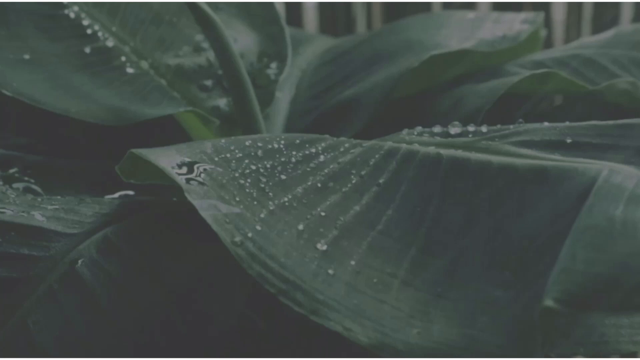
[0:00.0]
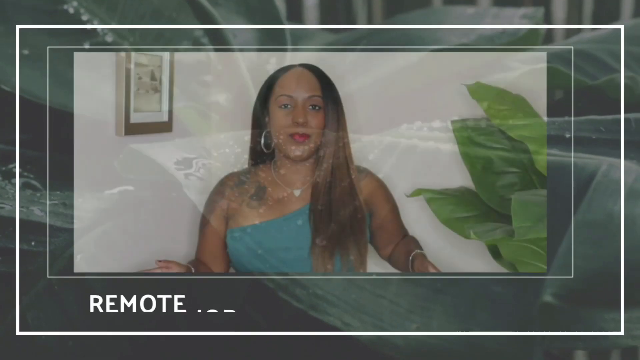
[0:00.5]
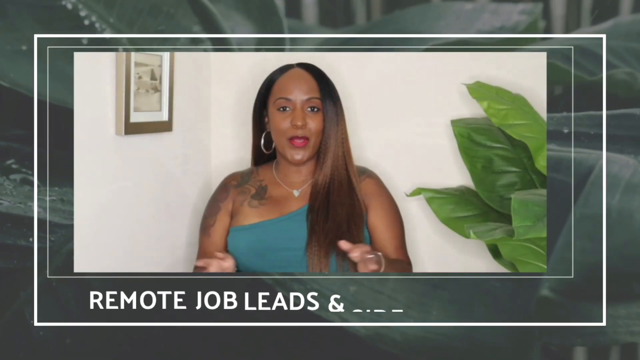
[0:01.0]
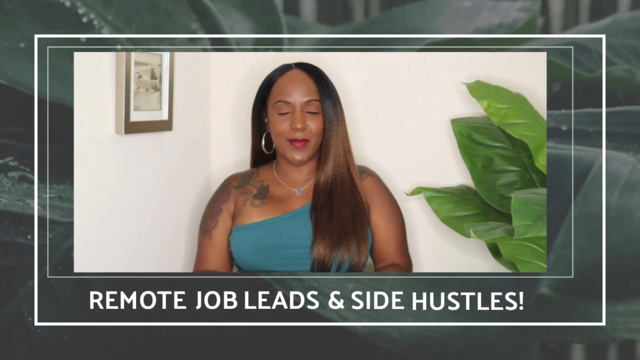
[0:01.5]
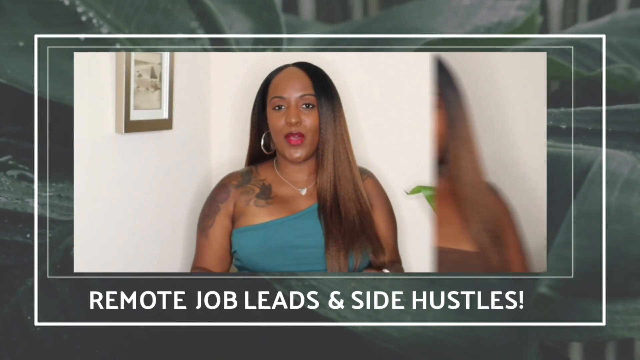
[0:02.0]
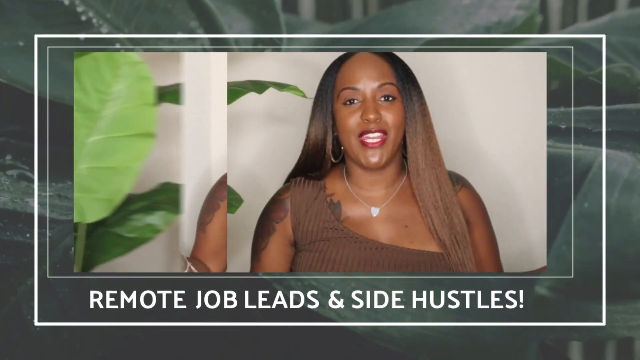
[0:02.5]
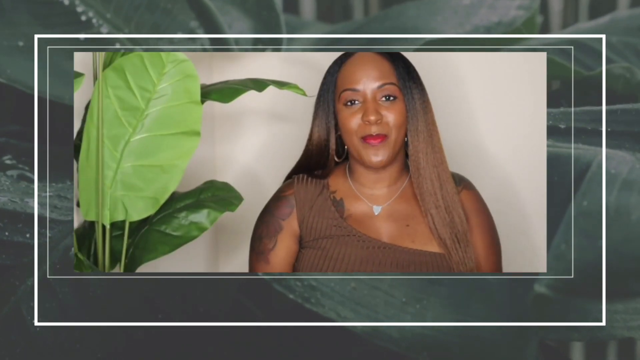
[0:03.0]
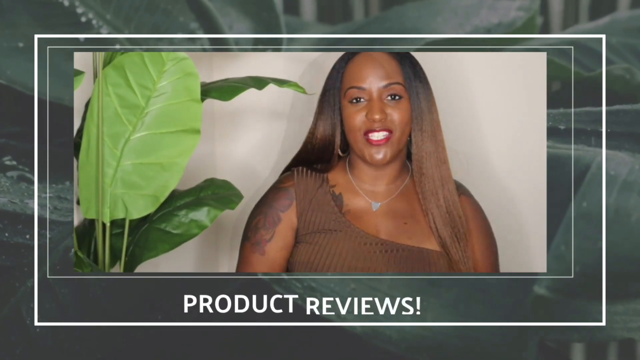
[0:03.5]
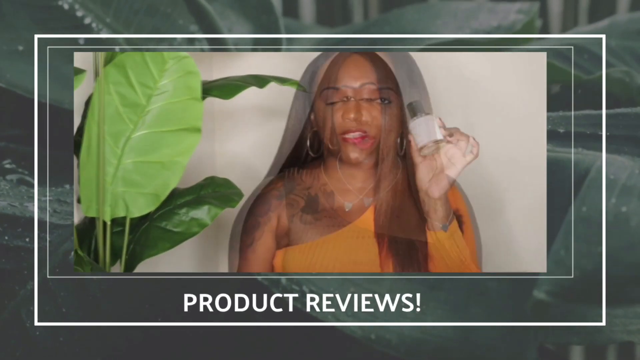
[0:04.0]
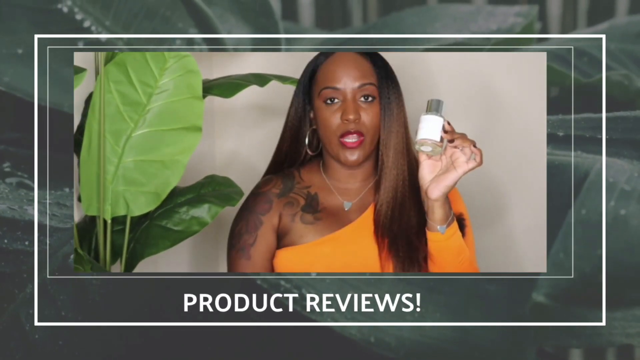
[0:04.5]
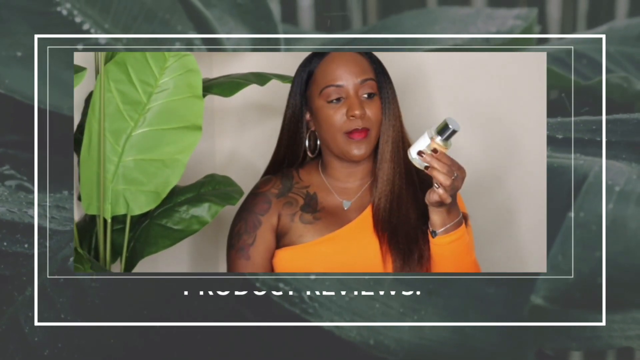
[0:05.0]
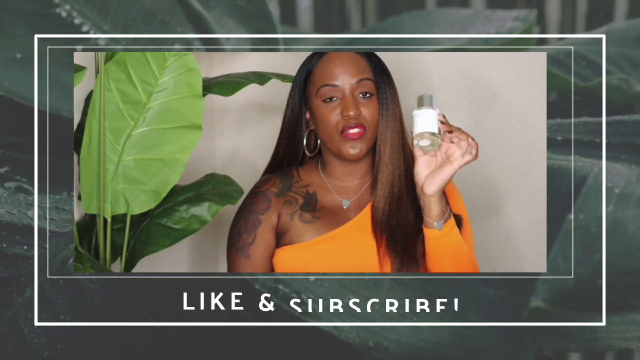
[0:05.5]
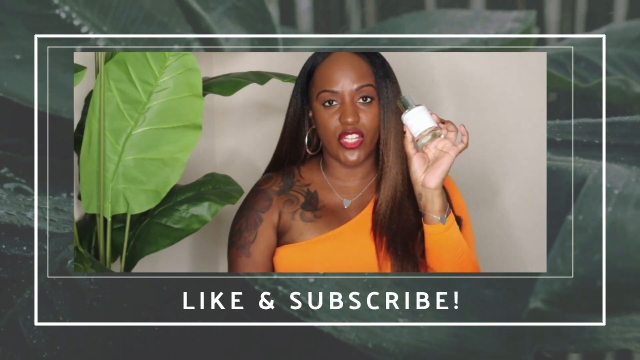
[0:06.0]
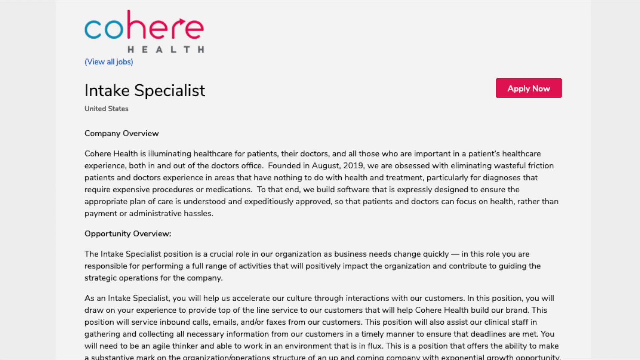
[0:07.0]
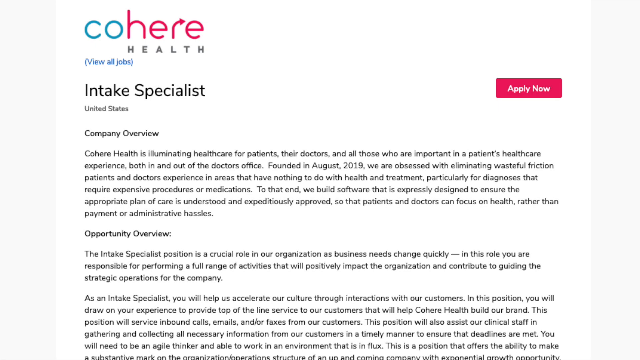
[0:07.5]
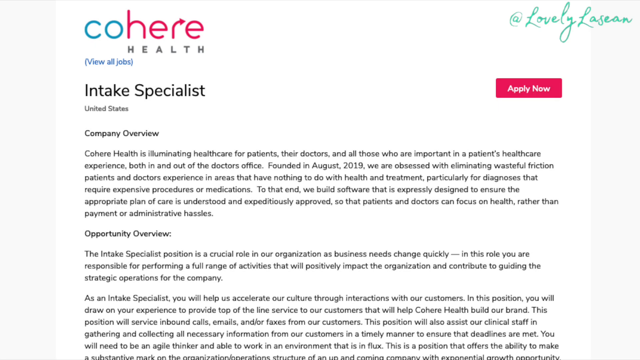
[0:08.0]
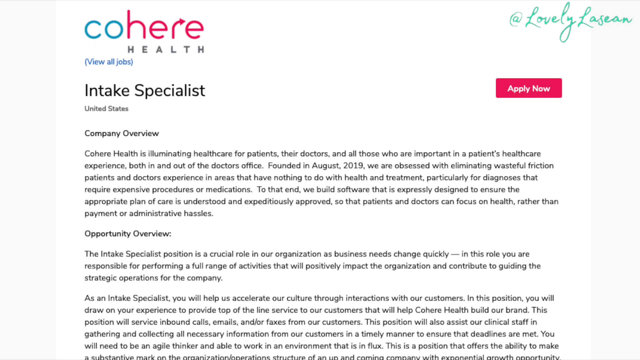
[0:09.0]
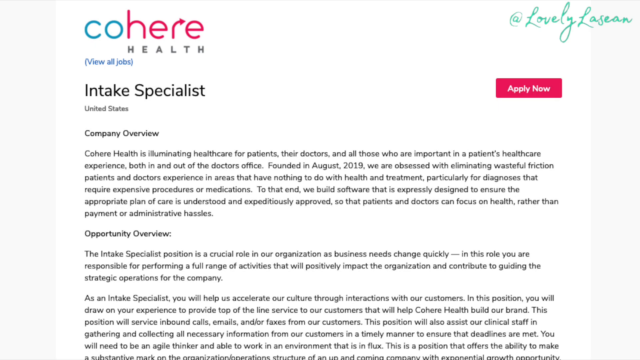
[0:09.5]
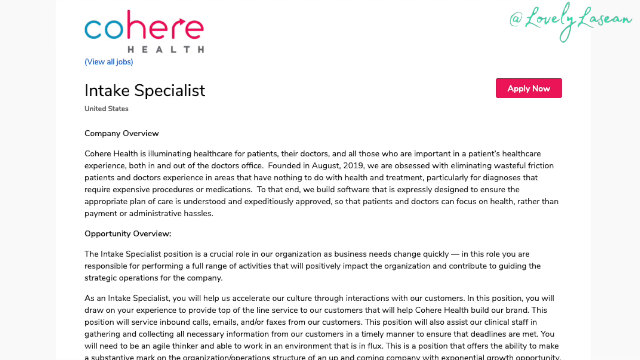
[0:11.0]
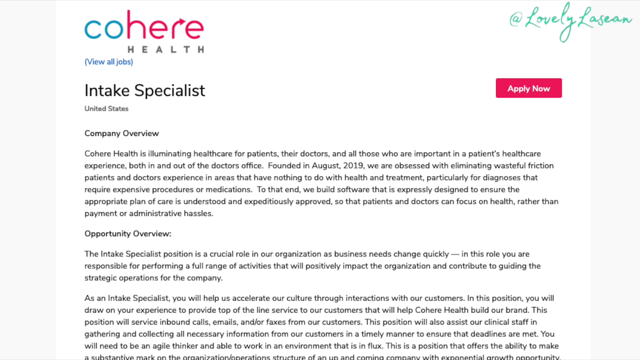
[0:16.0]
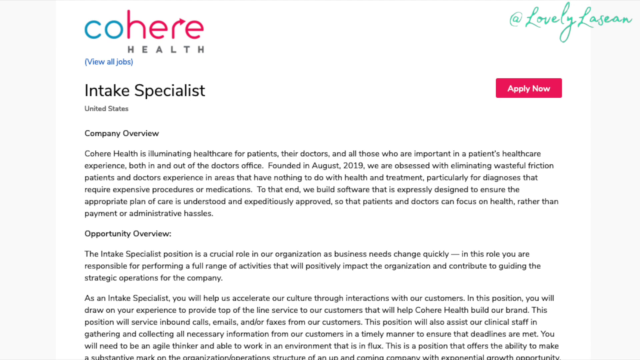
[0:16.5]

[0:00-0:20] A brand is being advertised, apparently a skincare product. A woman appears wearing a blue dress, then a brown dress, and then an orange dress. She holds a bottle of the advertised product. The video then moves to a page for applying and a product review. On-screen text asks viewers to like and subscribe. The product is called Cohere, written in blue and red. Another page gives a description of Cohere, with a company overview, an opportunity overview, and an option to apply, possibly to become a distributor. The screen says "remote jobs", which suggests that people may order the product and sell it on their own.